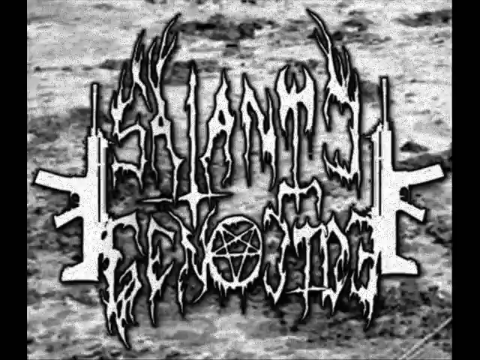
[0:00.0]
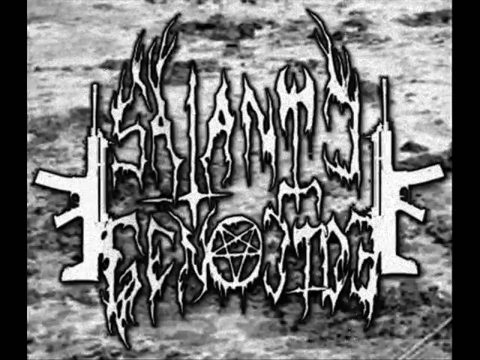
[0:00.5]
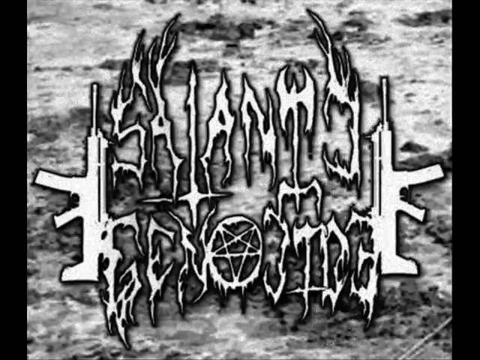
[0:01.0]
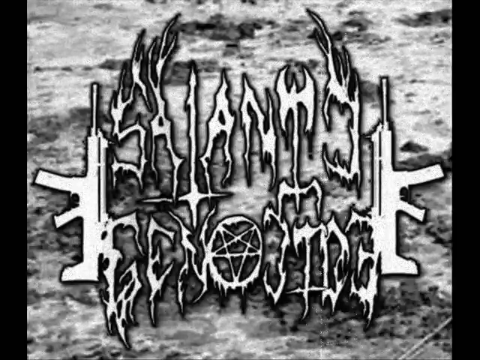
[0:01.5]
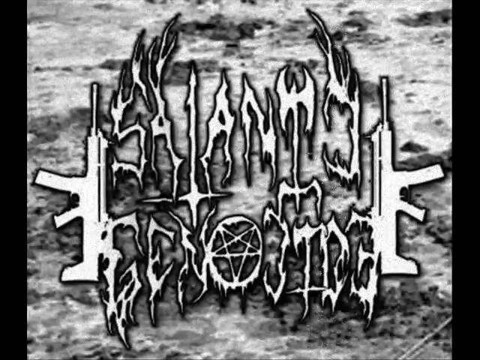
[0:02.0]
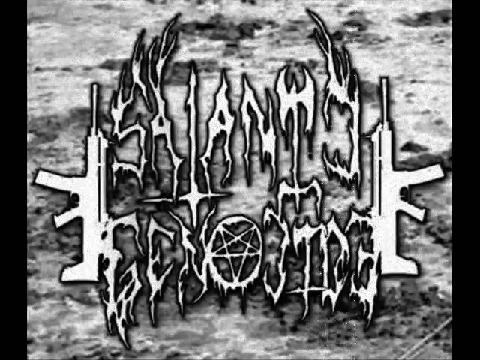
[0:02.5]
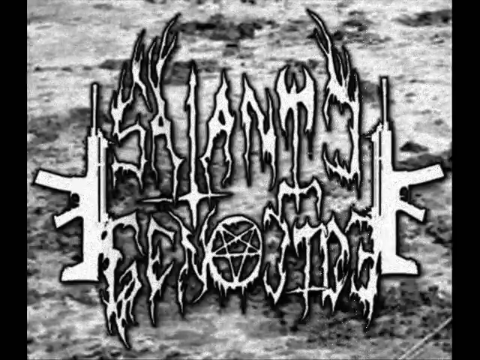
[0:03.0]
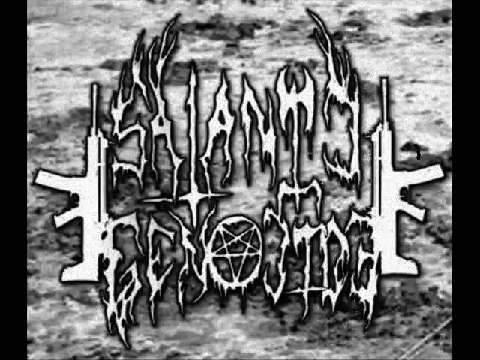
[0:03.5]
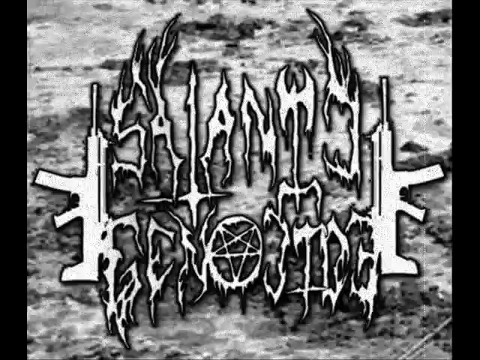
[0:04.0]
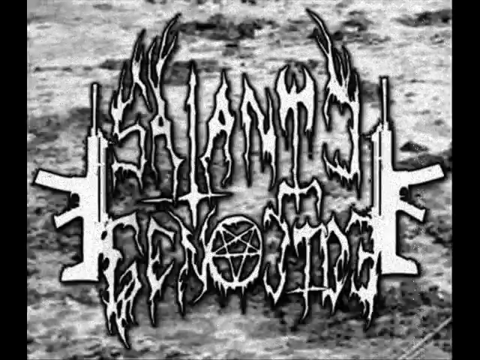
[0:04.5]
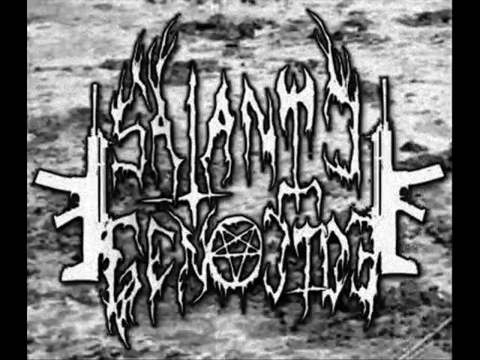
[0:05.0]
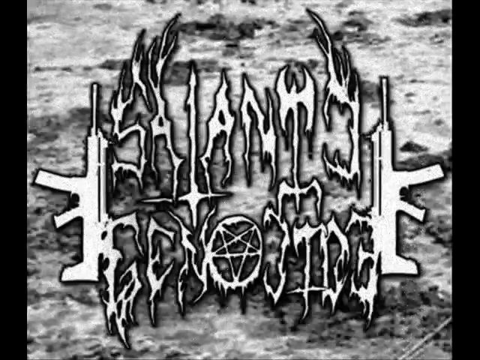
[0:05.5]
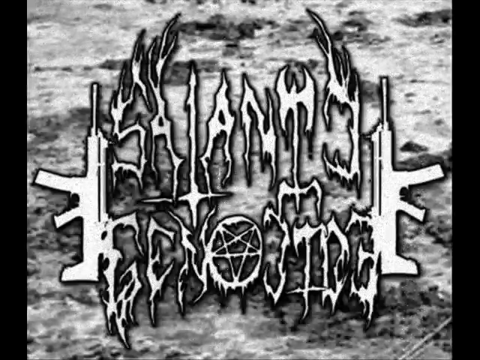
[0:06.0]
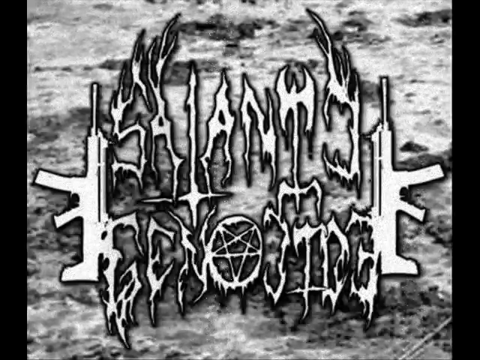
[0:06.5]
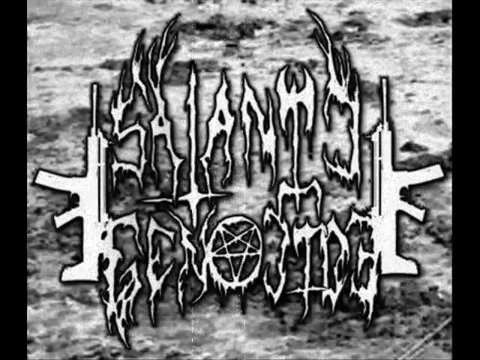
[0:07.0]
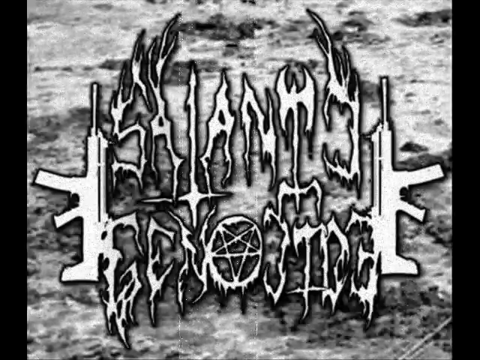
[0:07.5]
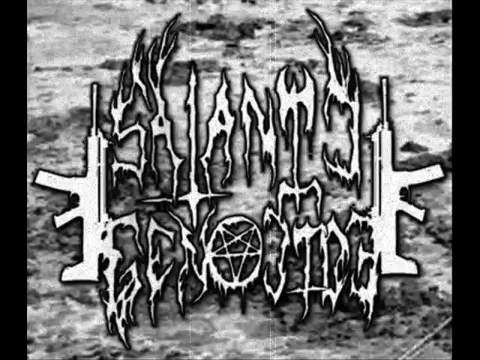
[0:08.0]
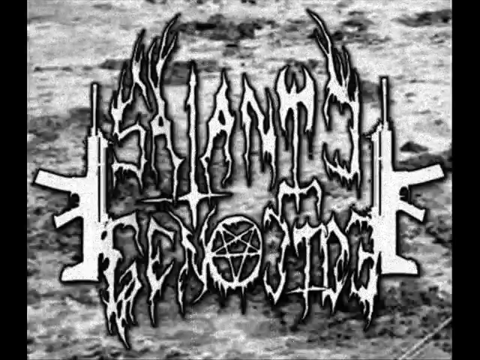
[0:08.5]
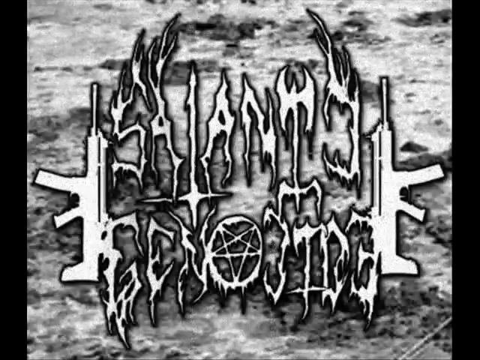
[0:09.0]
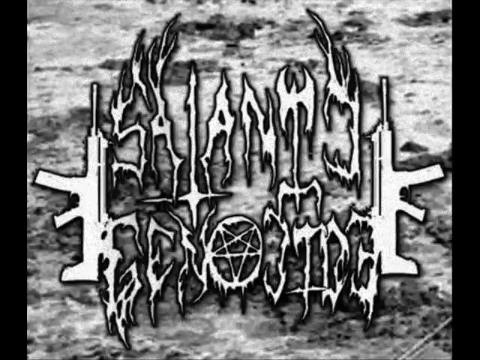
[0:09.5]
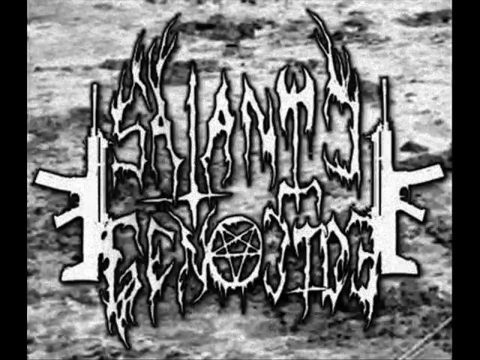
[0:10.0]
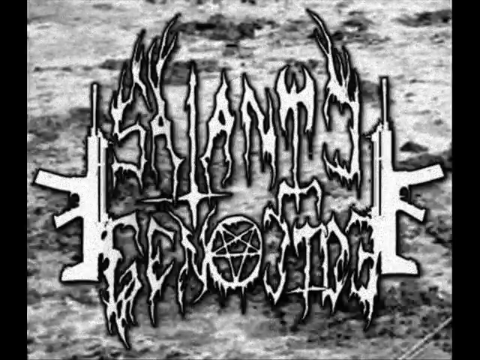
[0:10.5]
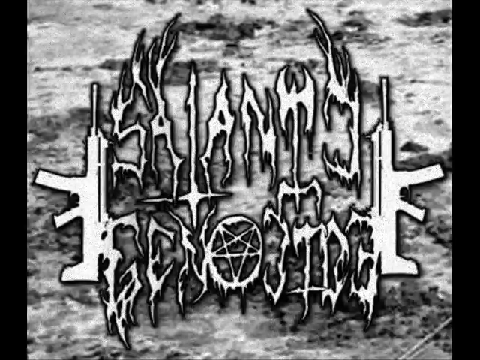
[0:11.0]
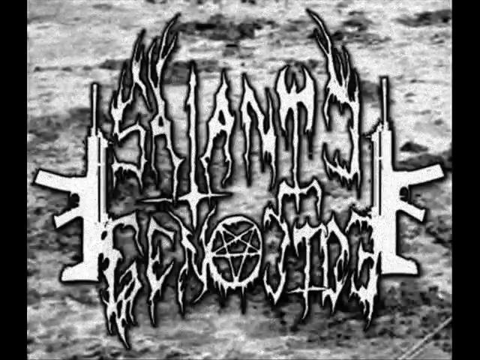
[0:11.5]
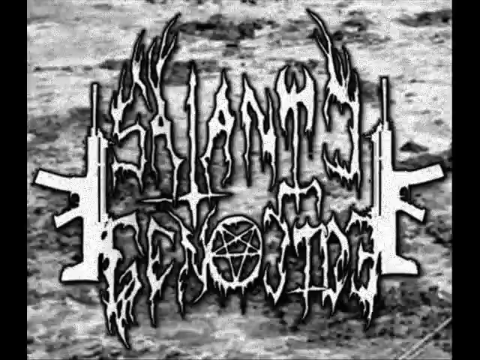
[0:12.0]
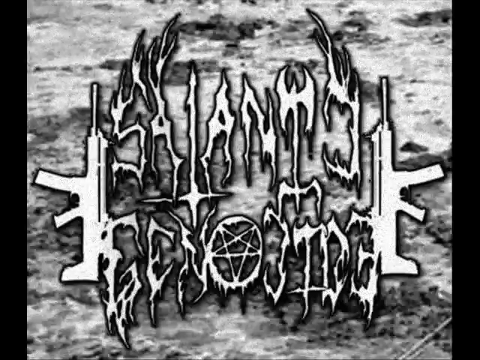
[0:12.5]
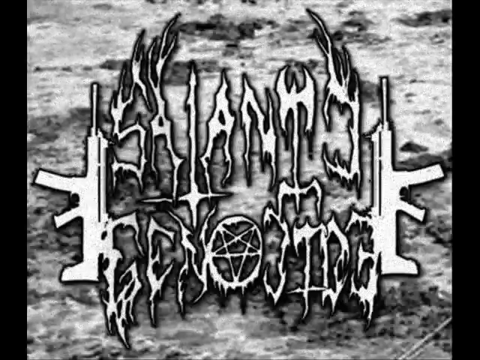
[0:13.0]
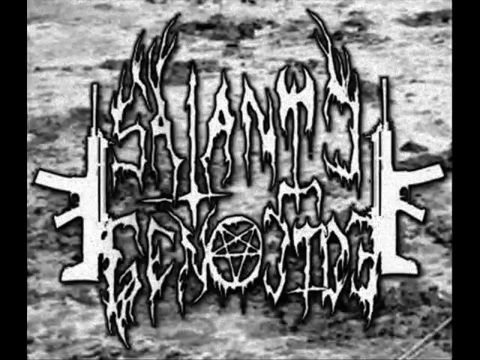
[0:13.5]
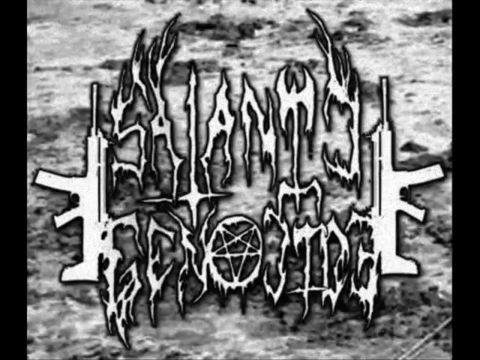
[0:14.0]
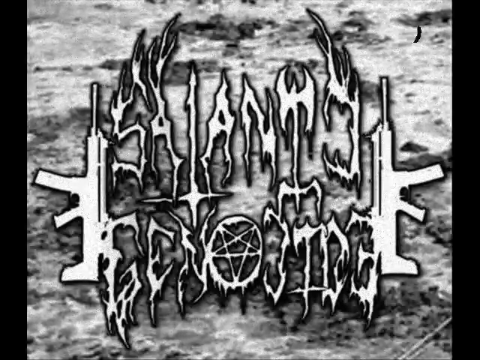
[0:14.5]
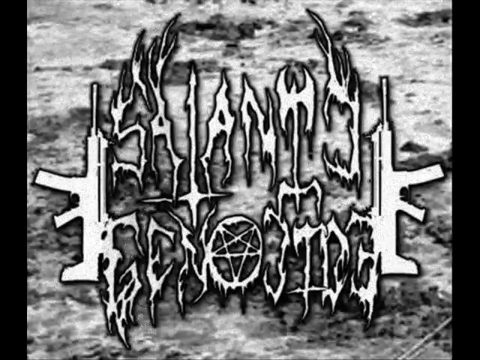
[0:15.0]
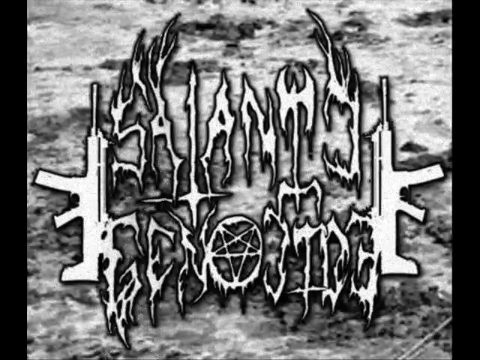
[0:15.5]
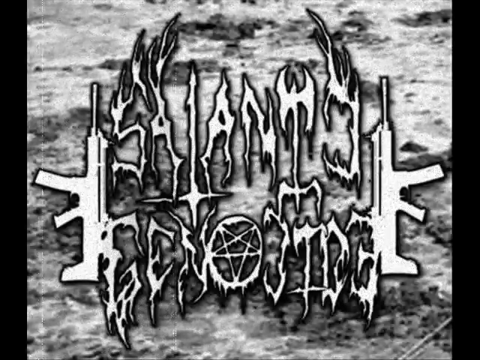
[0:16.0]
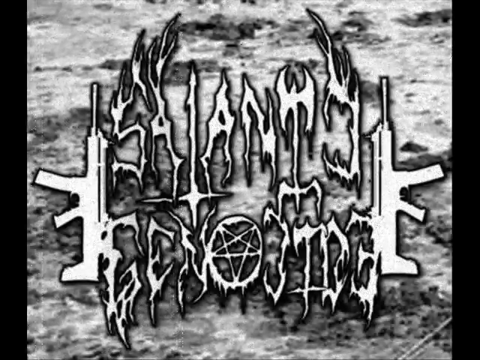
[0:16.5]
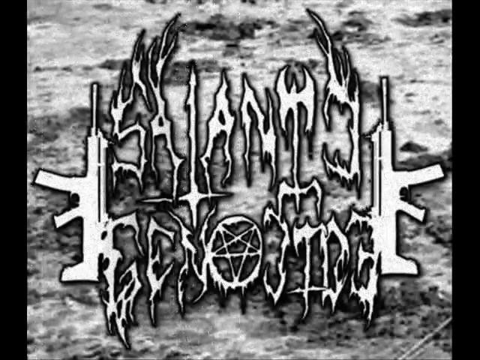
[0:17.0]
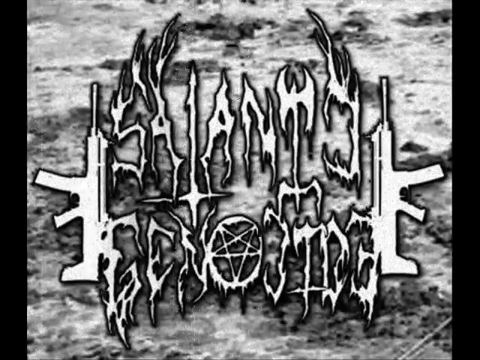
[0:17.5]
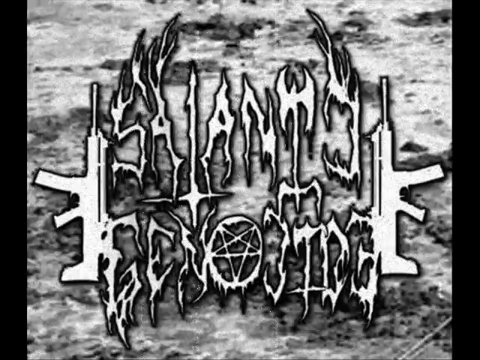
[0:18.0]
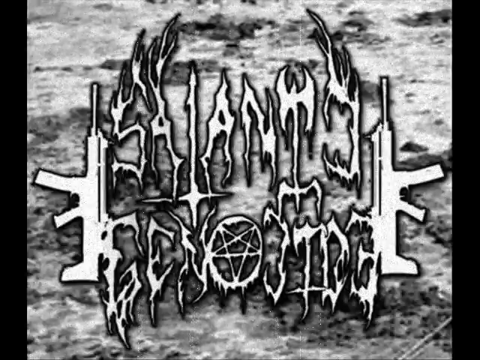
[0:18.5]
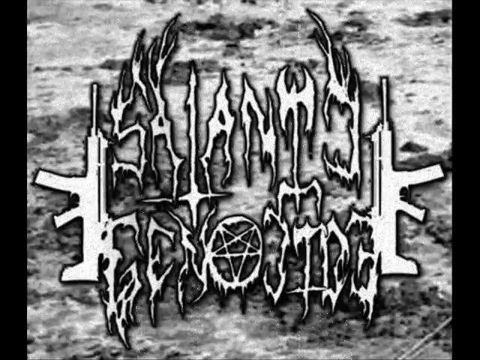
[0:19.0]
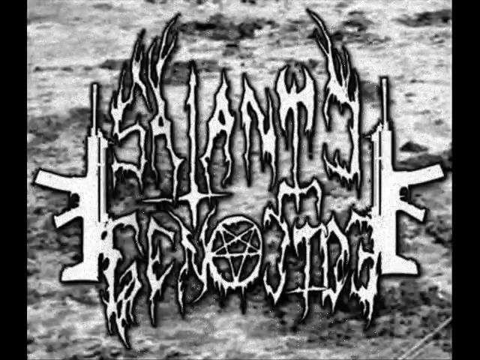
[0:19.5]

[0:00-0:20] A static logo appears on a grey background of sorts. There seem to be two rifles, and the text apparently reads "Satanic Genocide," with the O containing a pentagram symbol.